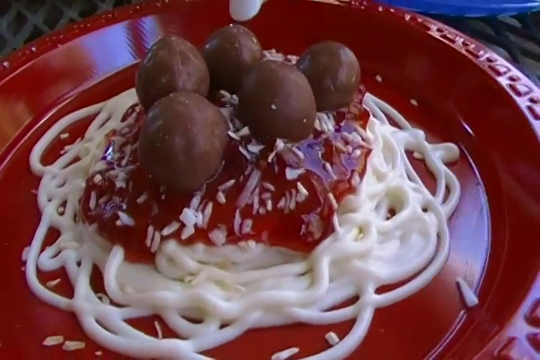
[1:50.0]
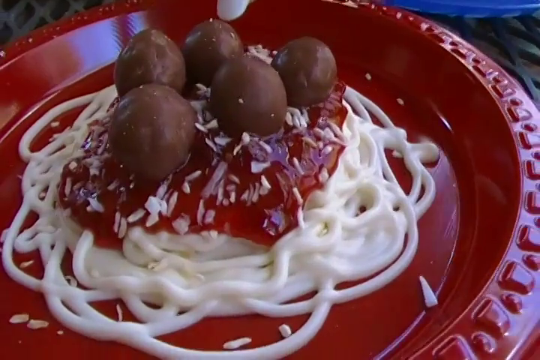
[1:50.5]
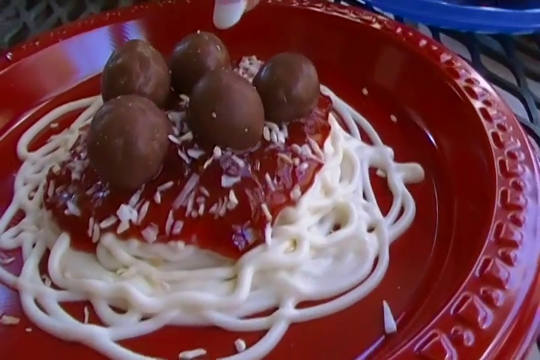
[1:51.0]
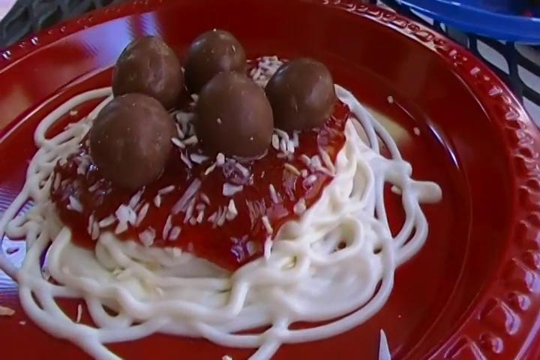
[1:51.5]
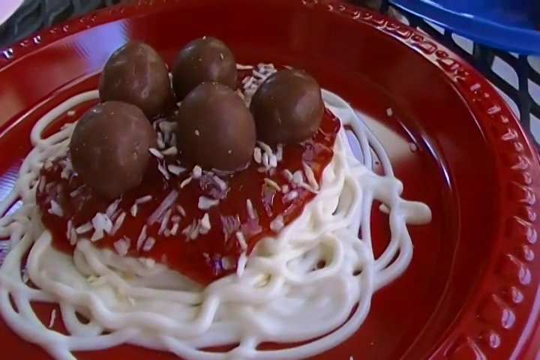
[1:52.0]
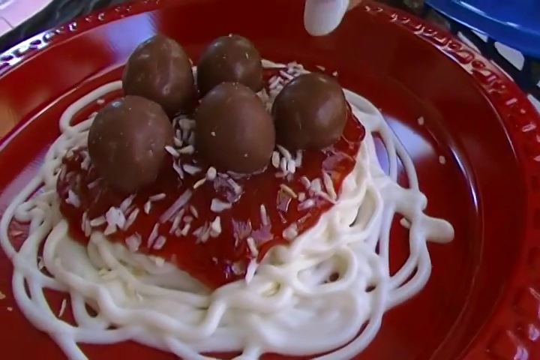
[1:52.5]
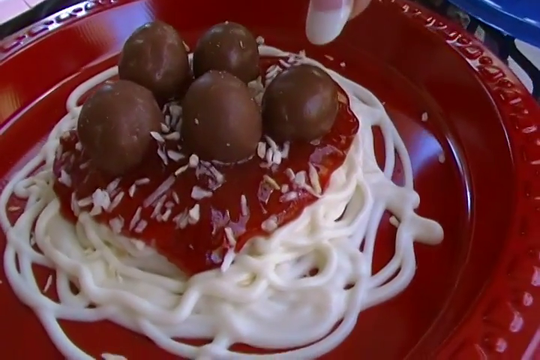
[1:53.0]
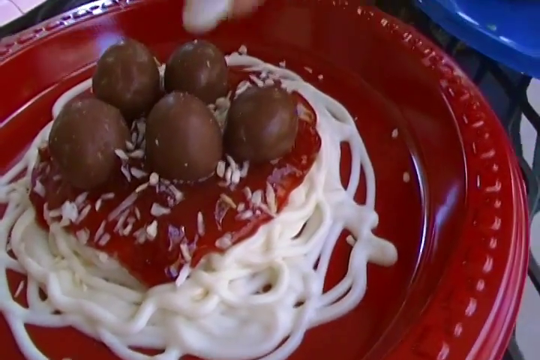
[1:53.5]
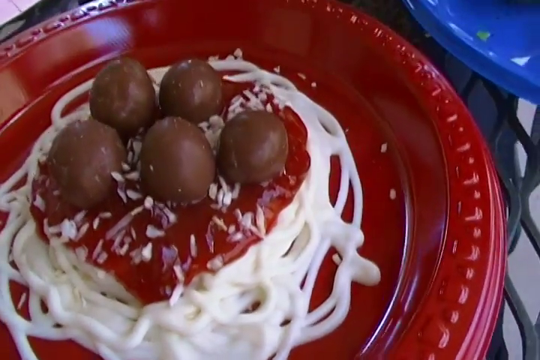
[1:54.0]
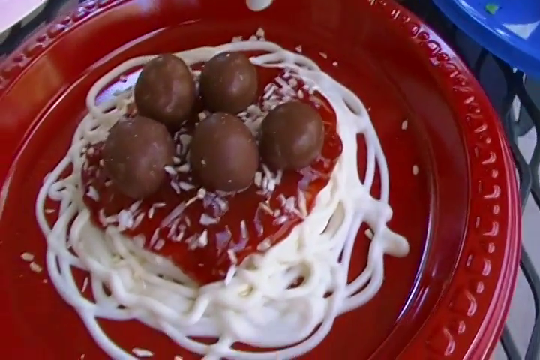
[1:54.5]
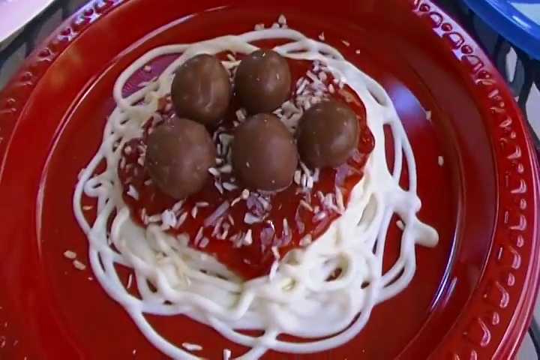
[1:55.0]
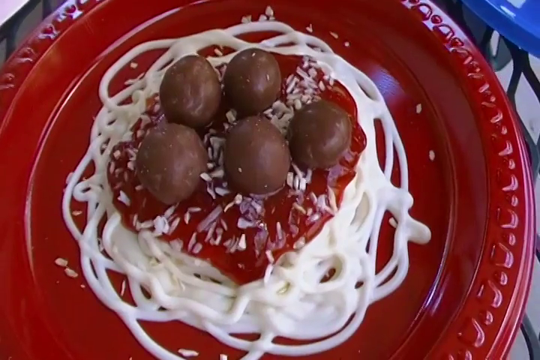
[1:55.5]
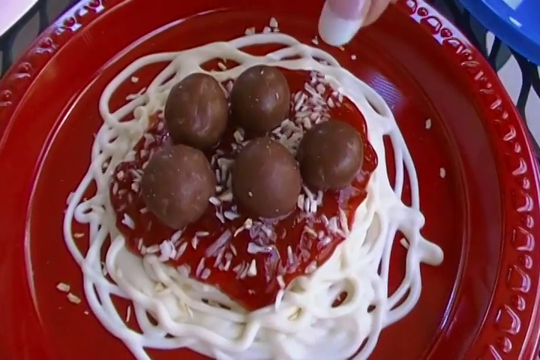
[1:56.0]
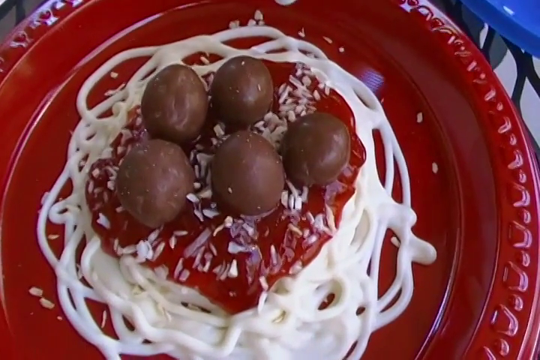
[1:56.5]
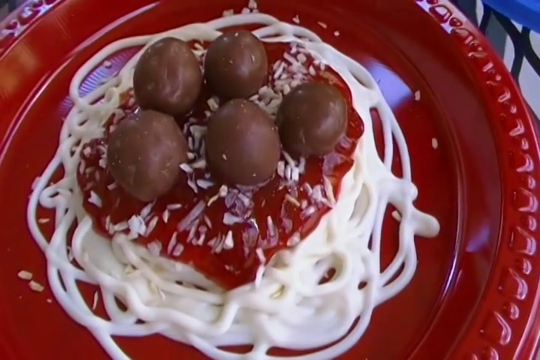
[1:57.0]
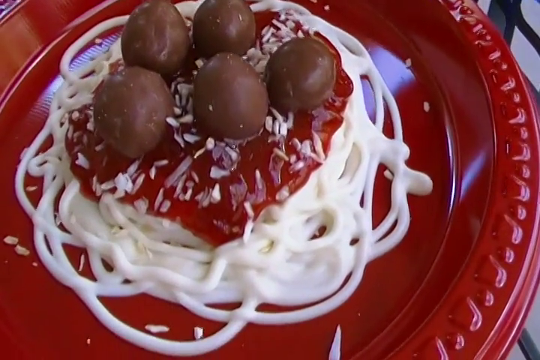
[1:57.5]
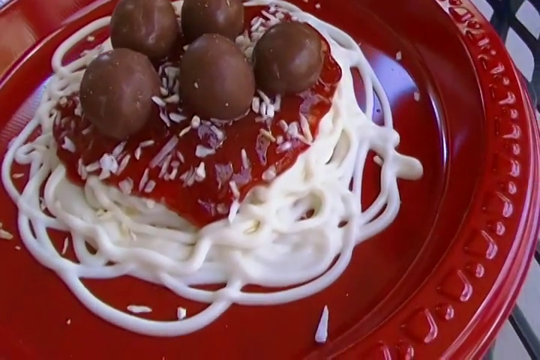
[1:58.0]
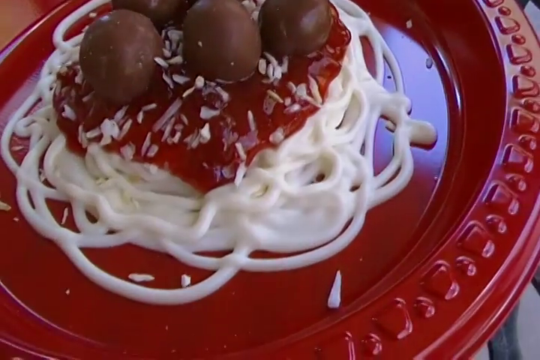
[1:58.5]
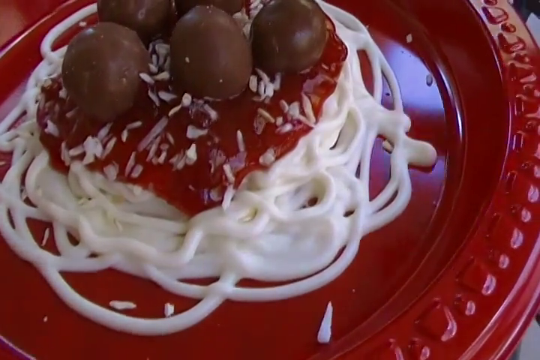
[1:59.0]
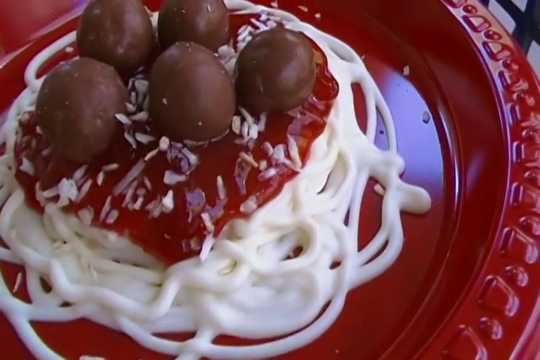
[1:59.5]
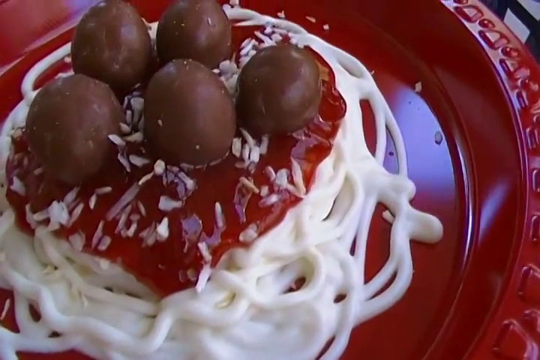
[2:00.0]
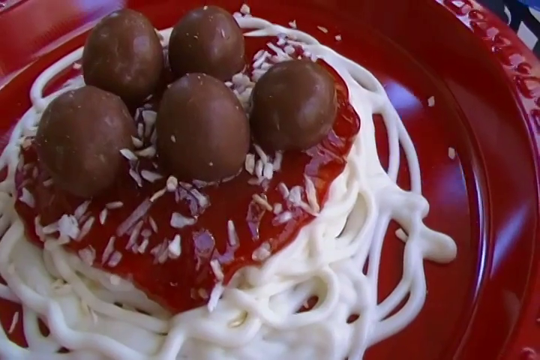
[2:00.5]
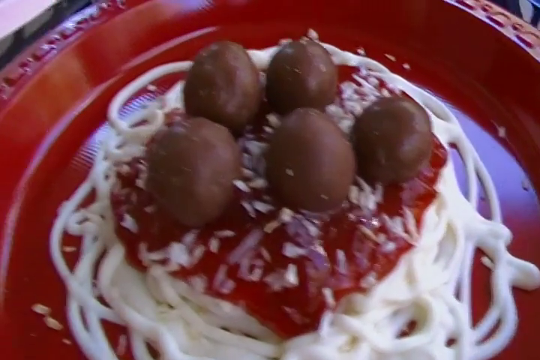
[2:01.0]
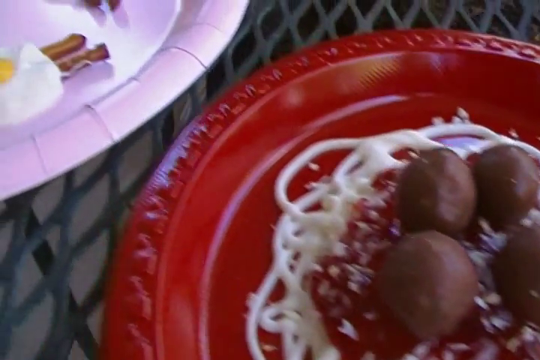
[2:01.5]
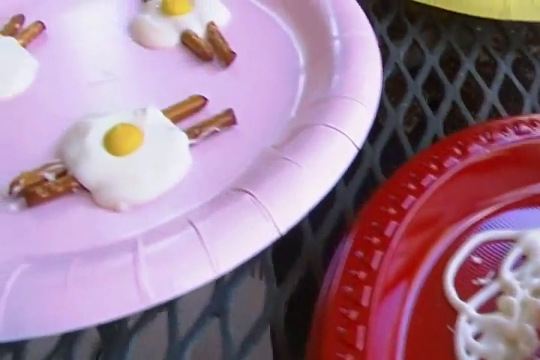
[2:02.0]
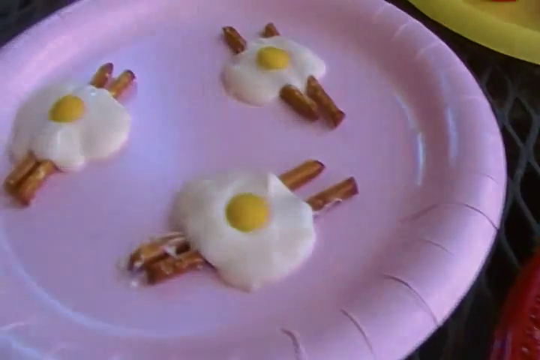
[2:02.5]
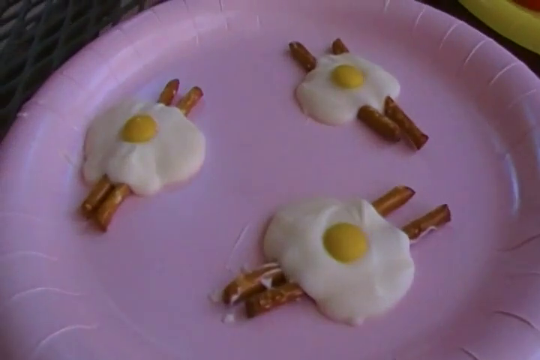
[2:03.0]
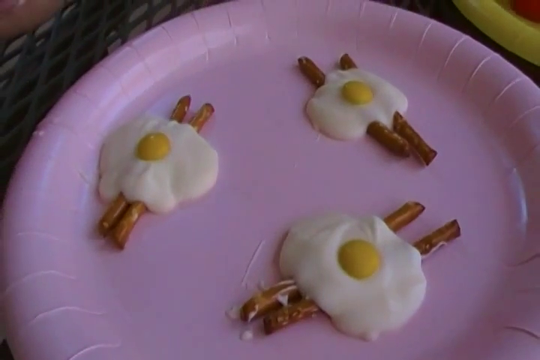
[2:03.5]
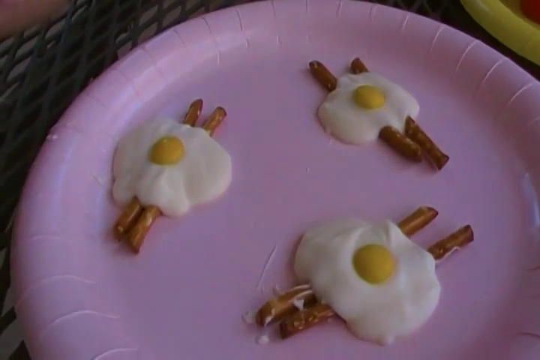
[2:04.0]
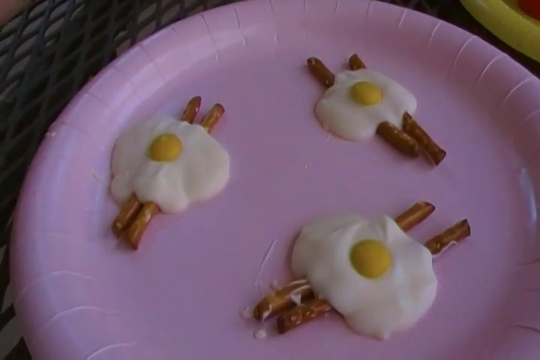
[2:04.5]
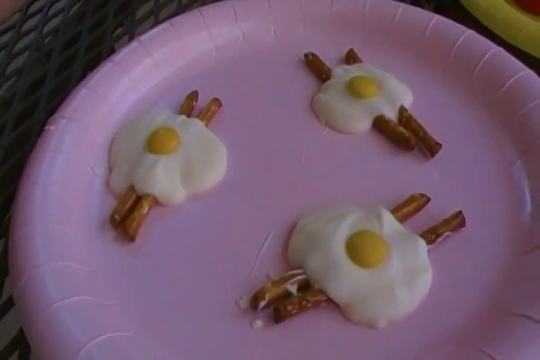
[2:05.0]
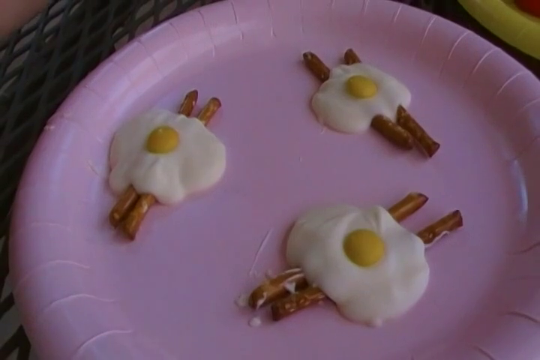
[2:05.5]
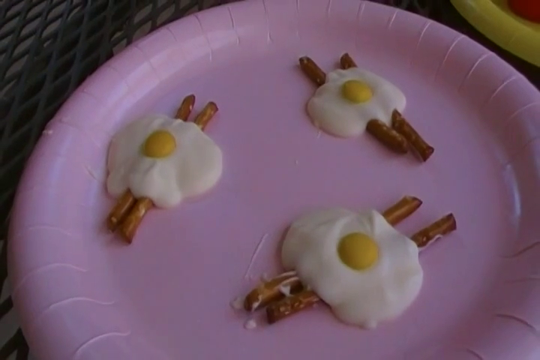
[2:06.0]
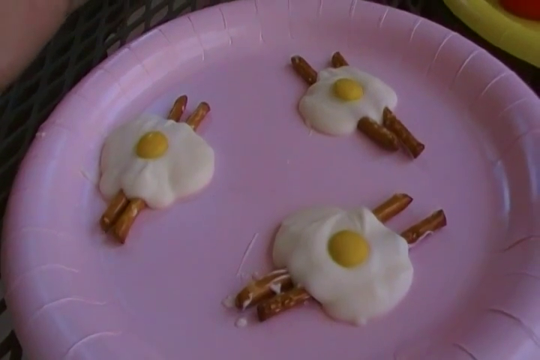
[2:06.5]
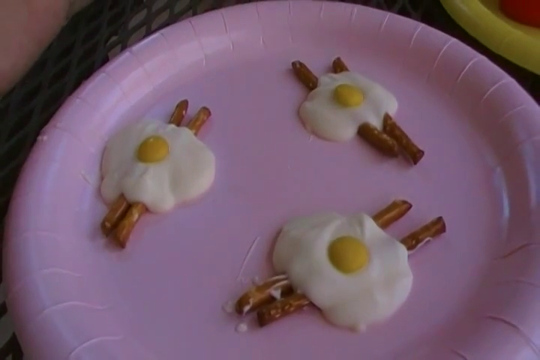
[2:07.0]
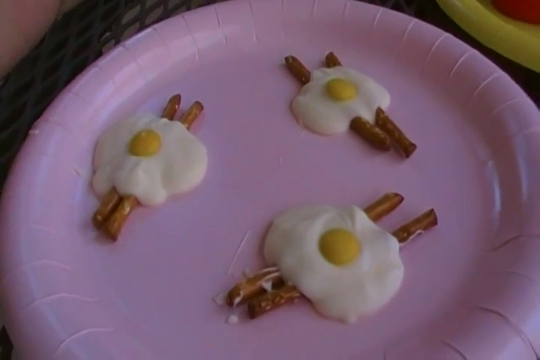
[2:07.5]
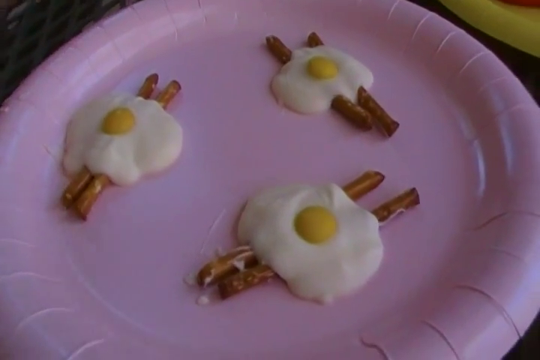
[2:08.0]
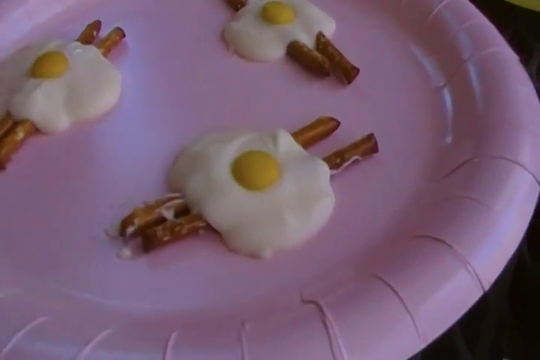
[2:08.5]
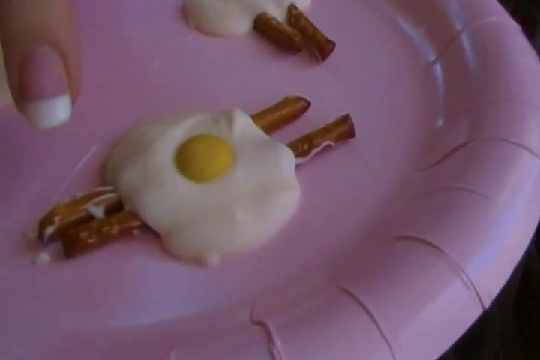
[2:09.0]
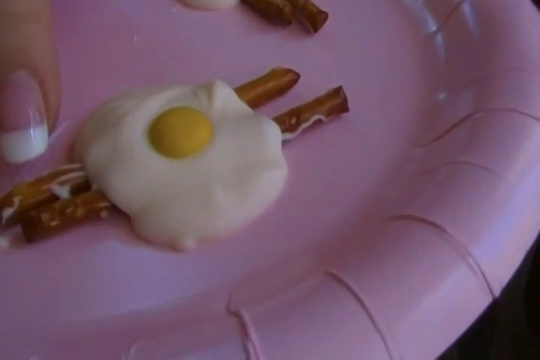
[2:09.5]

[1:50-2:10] The woman points to the little chocolate balls on top of the spaghetti, and the camera zooms in very close, showing different flakes on them; the dish looks like some type of odd spaghetti. When she finishes with the spaghetti, the camera pans to the next and final dish, which looks like some type of makeshift breakfast, with sticks, maybe cinnamon sticks, on top of what looks like fake eggs. As soon as she starts pointing to the egg, the shot cuts off. Both the breakfast and the spaghetti look very fake, apparently fake versions of breakfast, lunch and dinner.